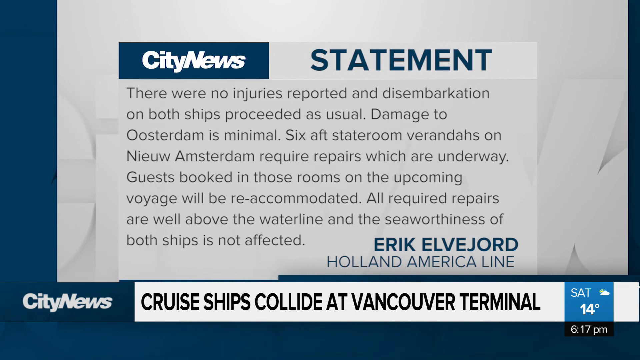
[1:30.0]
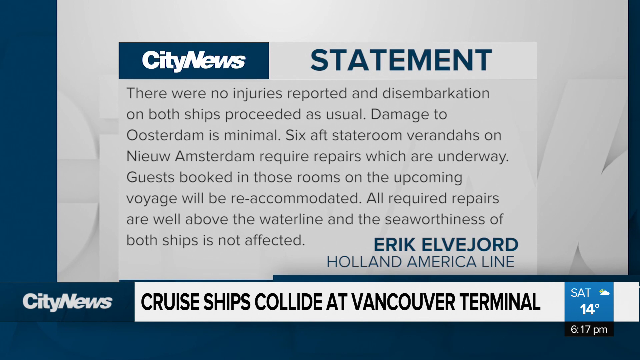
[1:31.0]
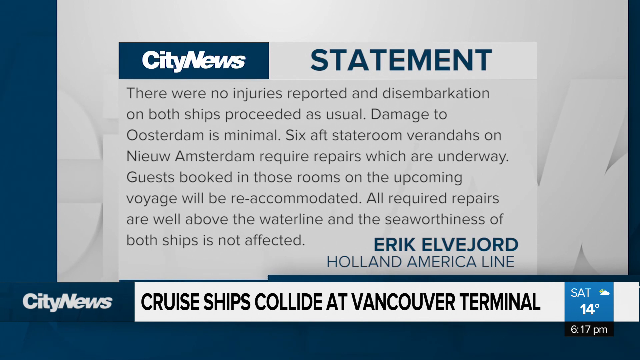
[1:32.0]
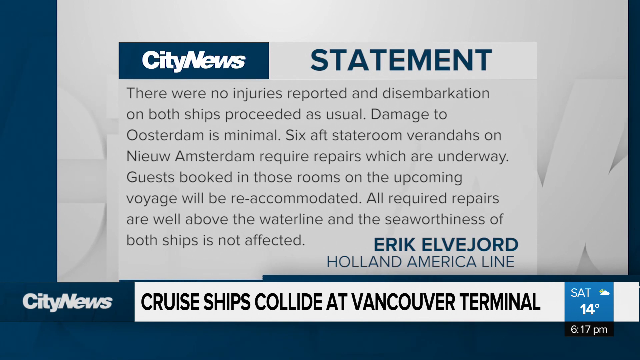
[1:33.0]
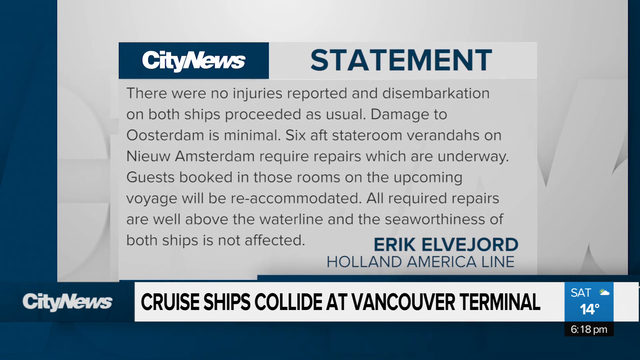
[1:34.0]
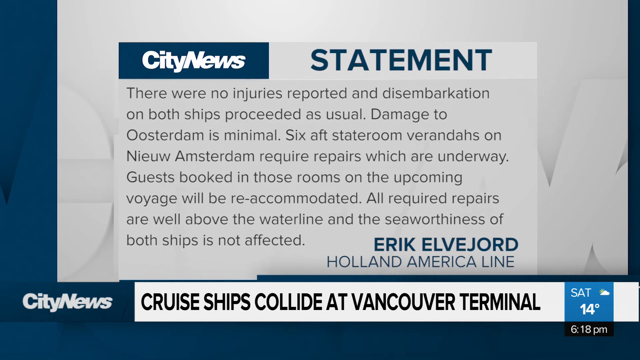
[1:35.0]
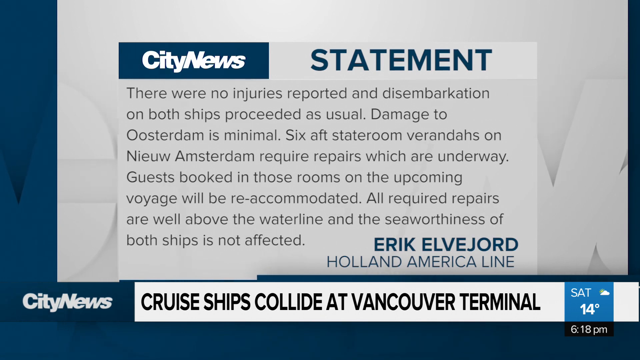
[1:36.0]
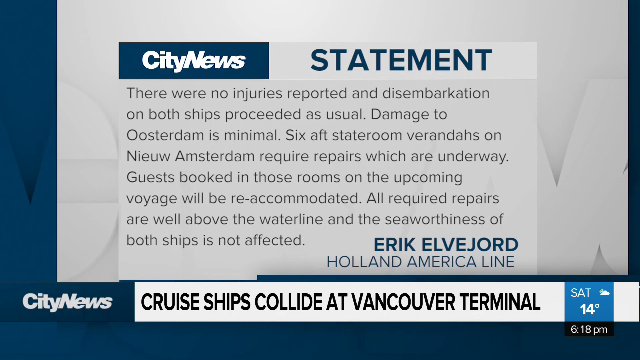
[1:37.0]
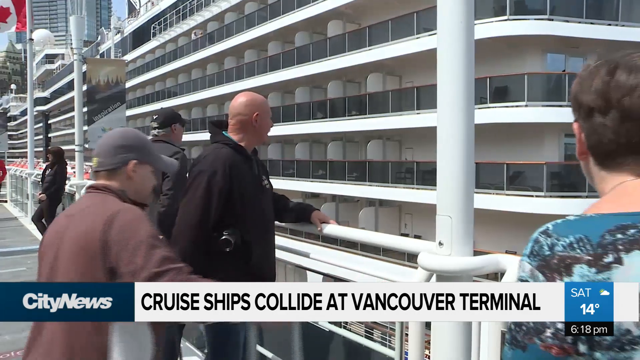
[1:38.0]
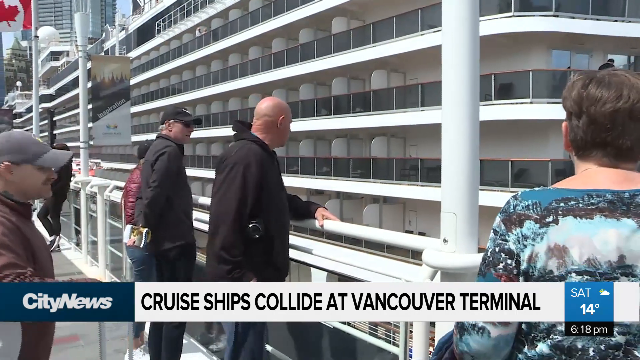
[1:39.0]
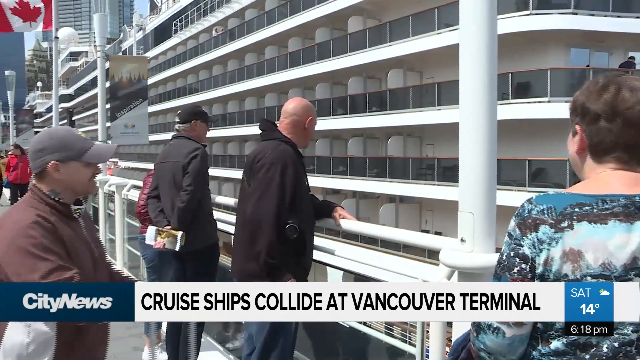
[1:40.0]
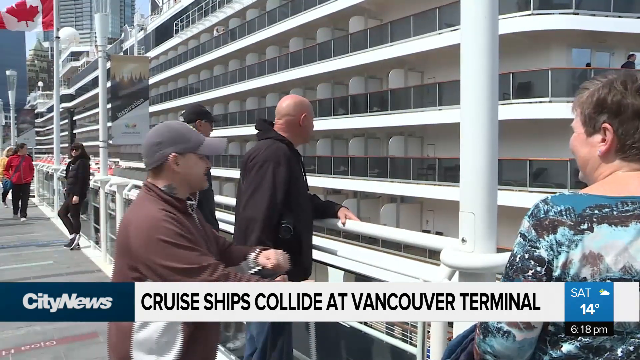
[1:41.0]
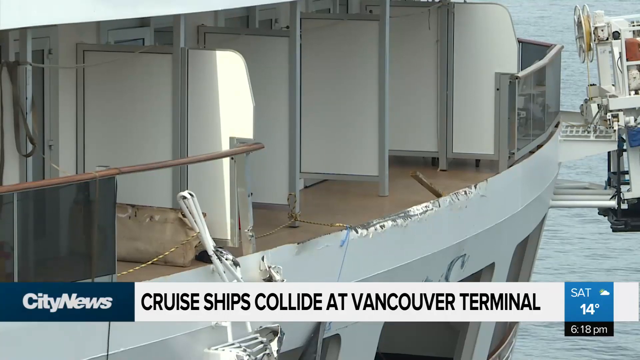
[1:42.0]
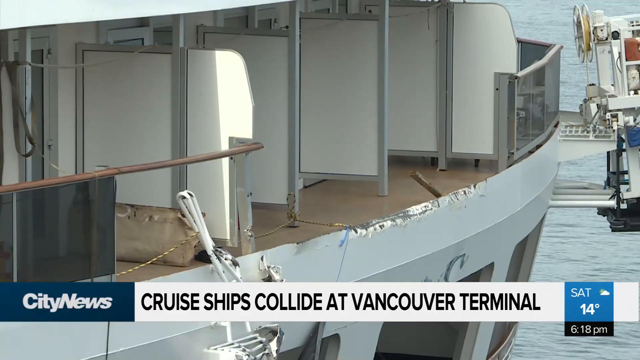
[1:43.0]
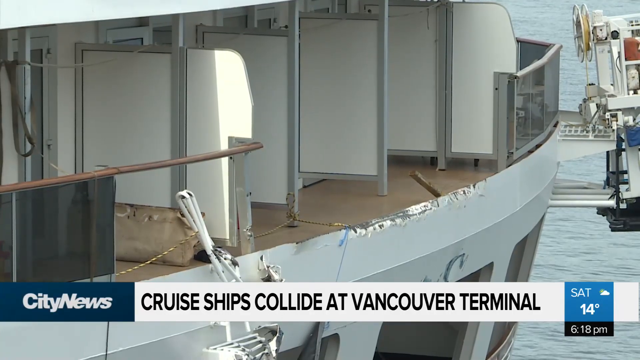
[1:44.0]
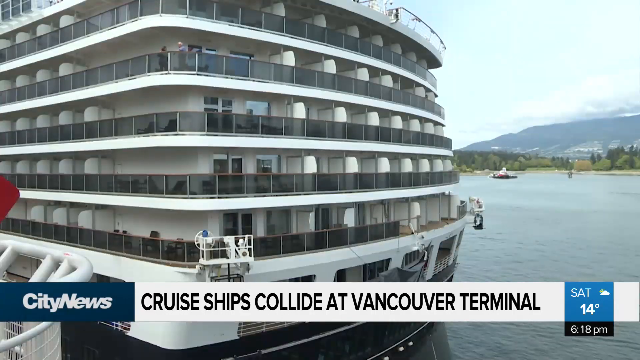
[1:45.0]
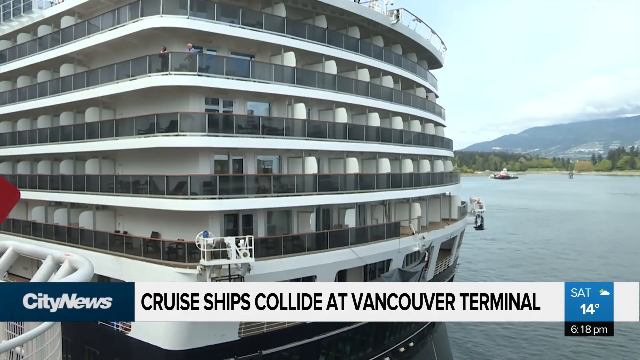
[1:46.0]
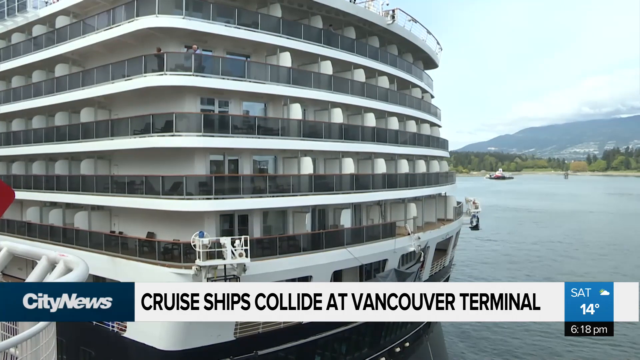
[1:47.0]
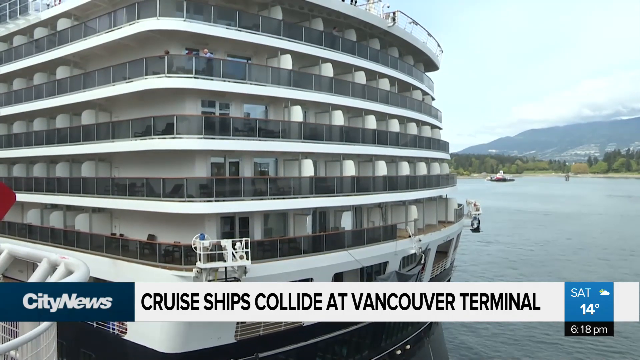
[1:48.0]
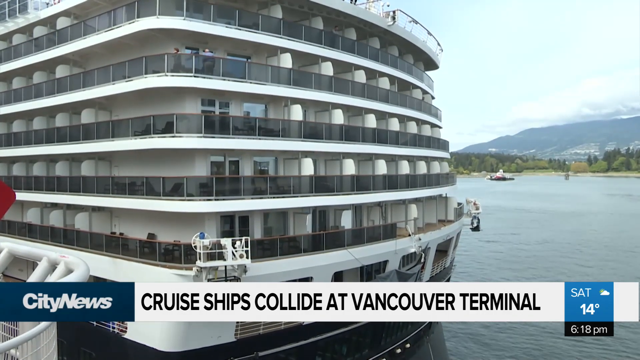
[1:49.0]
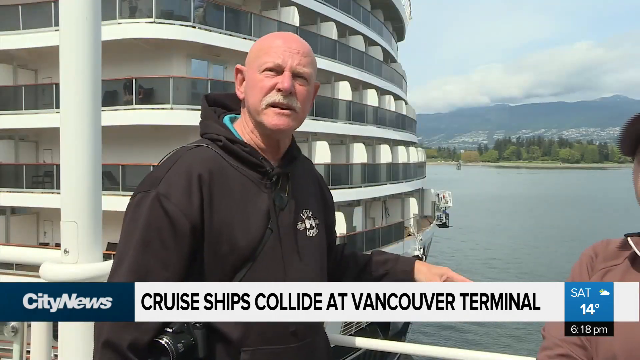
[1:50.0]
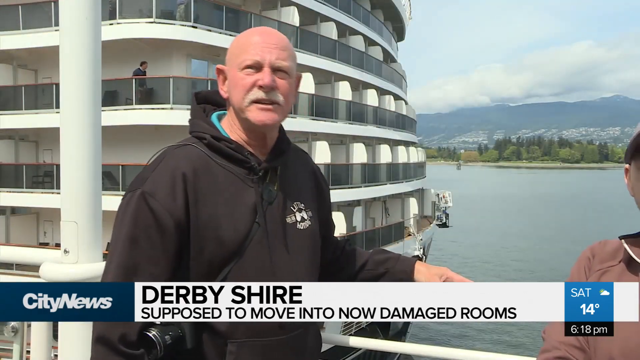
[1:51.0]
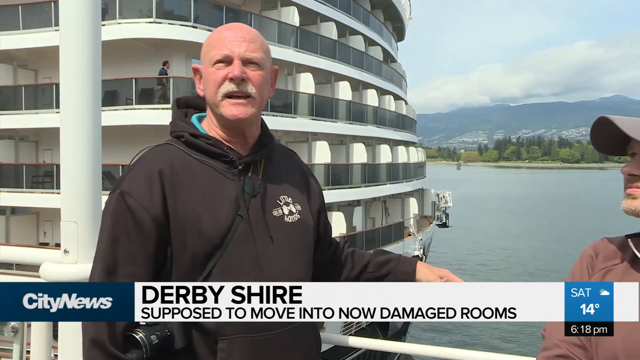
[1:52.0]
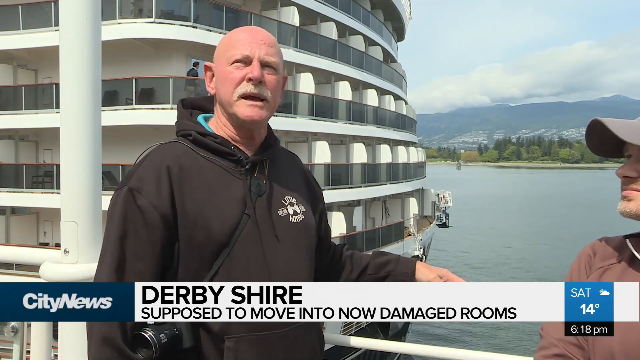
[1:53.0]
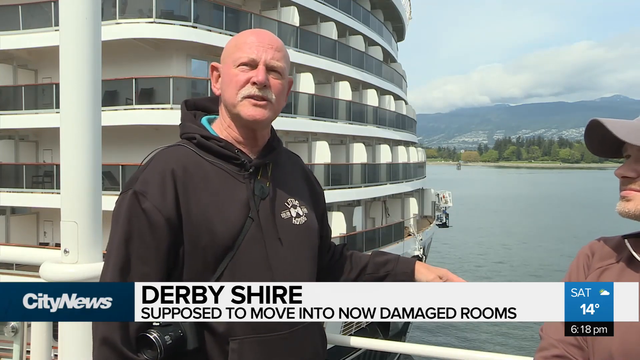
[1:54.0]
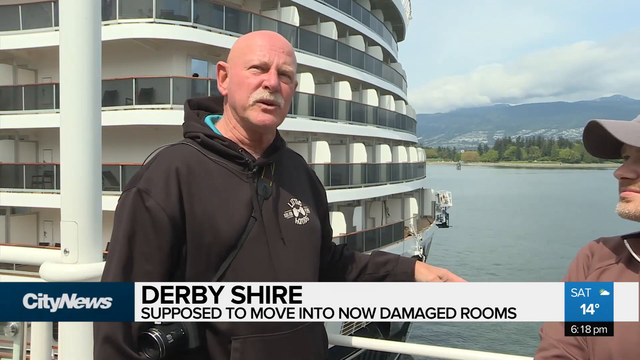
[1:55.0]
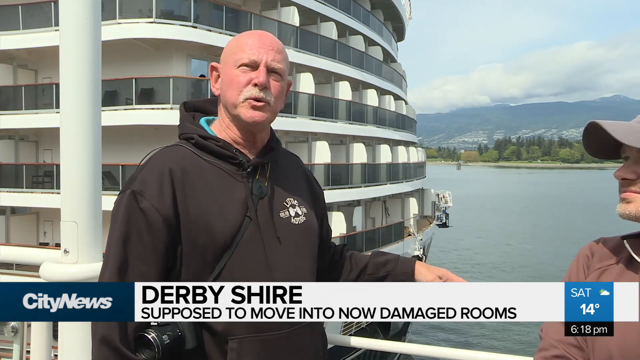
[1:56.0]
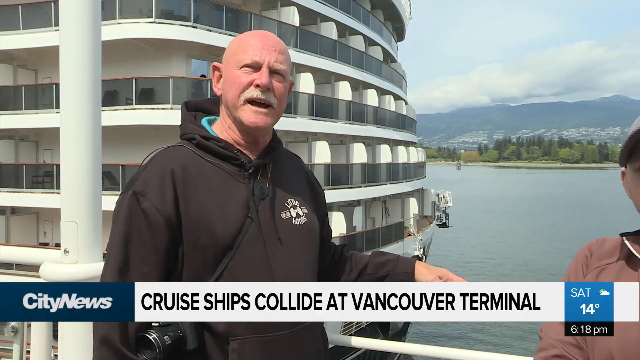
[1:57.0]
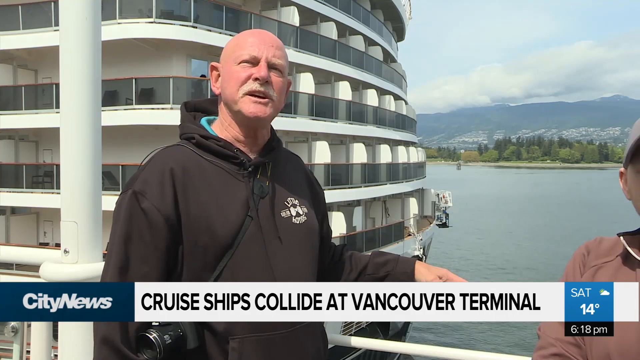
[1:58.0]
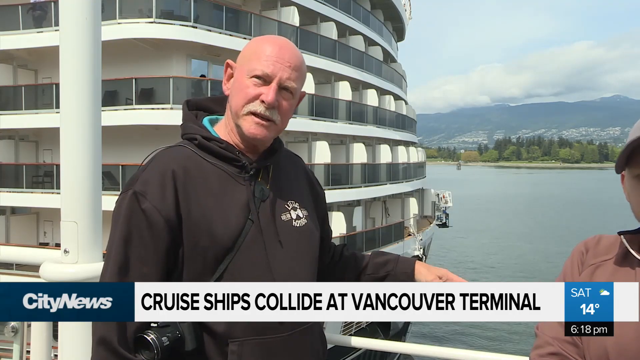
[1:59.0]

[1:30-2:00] The written statement is on screen: "there were no injuries reported and disembarkation on both ships proceeded as usual. Damage to Oosterdam is minimal. Six aft stateroom verandas on New Amsterdam require repairs which are underway. Guests booked in those rooms on the upcoming voyage will be re-accommodated. All required repairs are well above the waterline and the seaworthiness of both ships is not affected." It is attributed to Eric Elvoord of Holland America Line, with a banner beneath reading "cruise ships collide at Vancouver Terminal". After about four seconds, the video cuts to a group of about five or six people gathered along the dock, looking to the right at the damaged cruise ship. They are not panicked and appear more curious than anything. A bald man in a black hoodie seems the most interested, looking at the ship. After about three seconds, a close-up shows a damaged area of the ship where some railings have been broken off and the outer hull is damaged, though the boat is still floating. The banner beneath reads "cruise ships collide at Vancouver Terminal". Three seconds later, a wider shot shows the entire boat, five stories high with an observational deck on each level. After another three seconds, the video cuts to an interview with the bald man in the black hoodie. The banner beneath him reads "Derby Shire" and "supposed to move into new damaged rooms". He is in his late 50s, bald, with a white mustache, and describes what he saw. To his left, mostly off-screen, a shorter man in a baseball cap listens. Derby Shire seems very calm, and after three seconds the banner changes to "cruise ships collide at Vancouver Terminal".